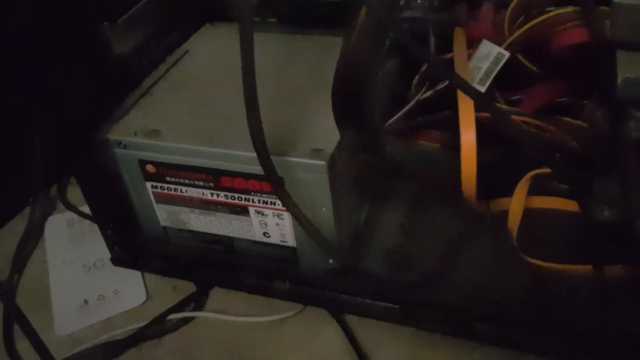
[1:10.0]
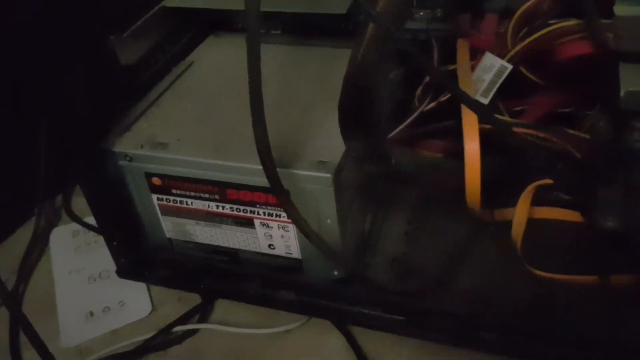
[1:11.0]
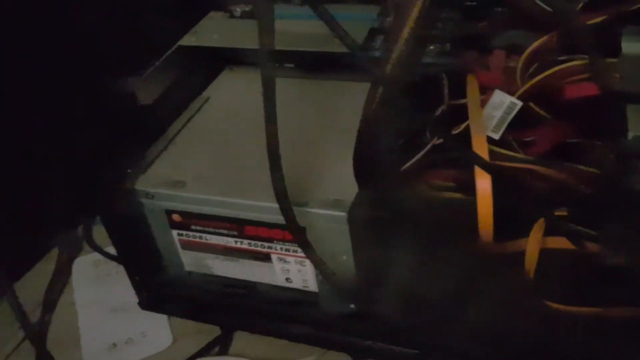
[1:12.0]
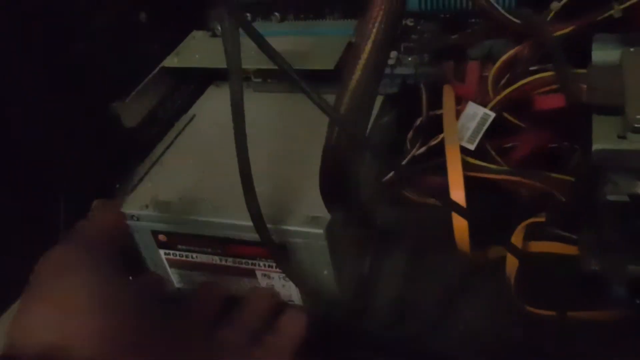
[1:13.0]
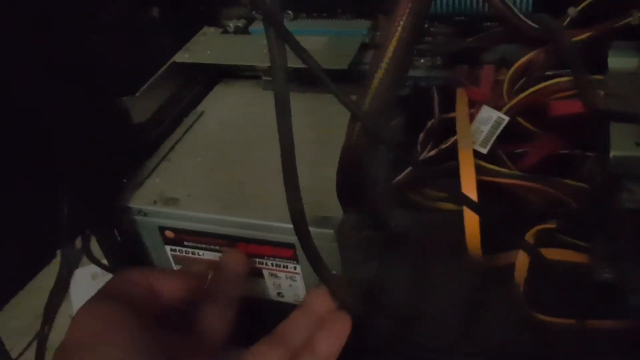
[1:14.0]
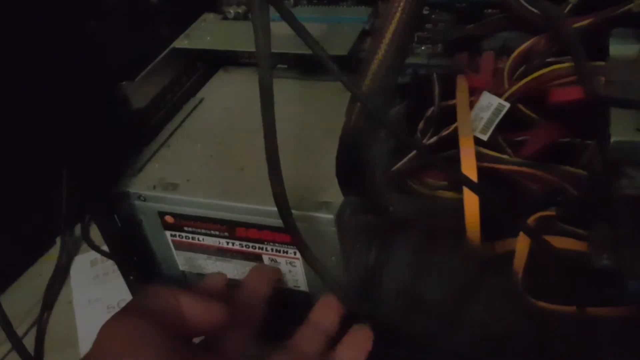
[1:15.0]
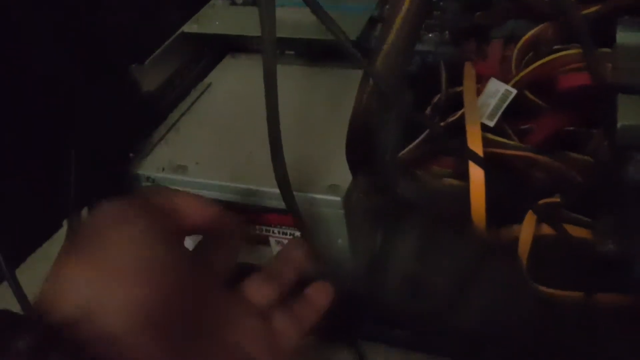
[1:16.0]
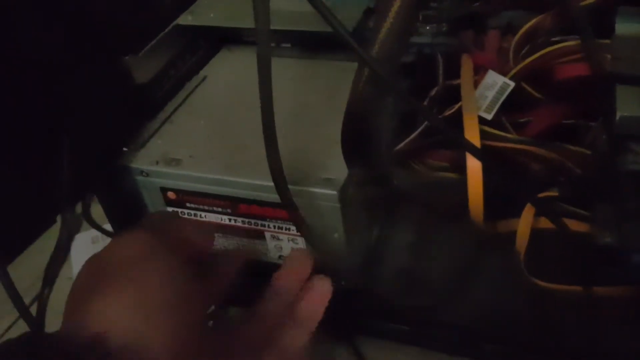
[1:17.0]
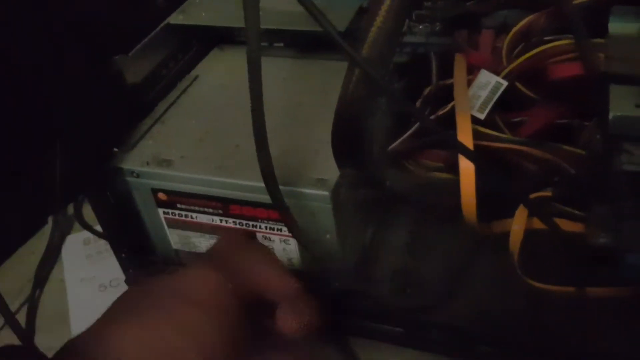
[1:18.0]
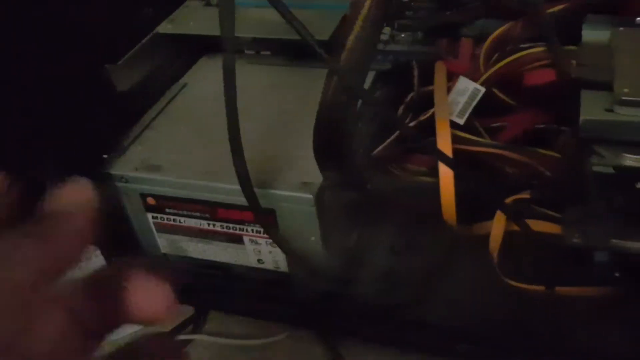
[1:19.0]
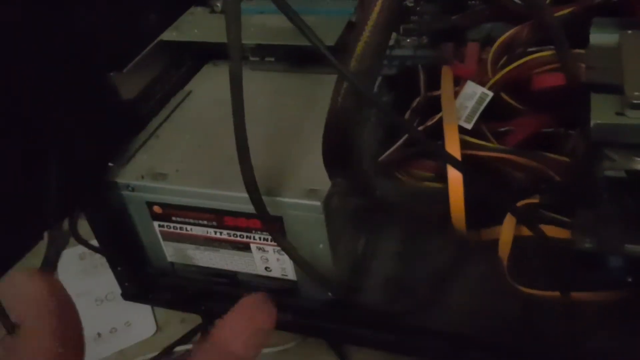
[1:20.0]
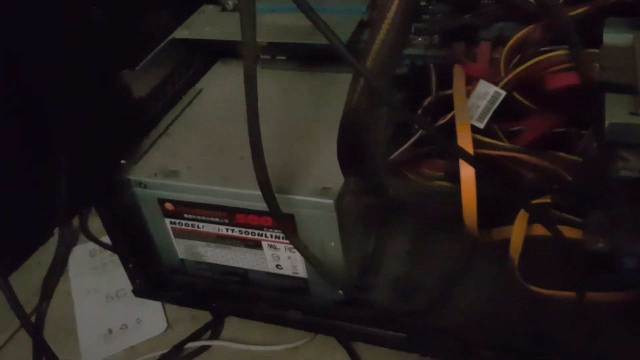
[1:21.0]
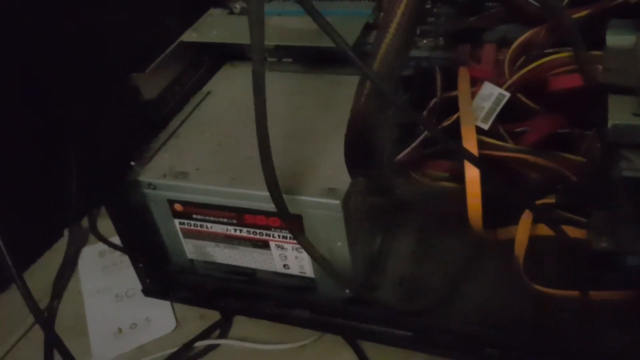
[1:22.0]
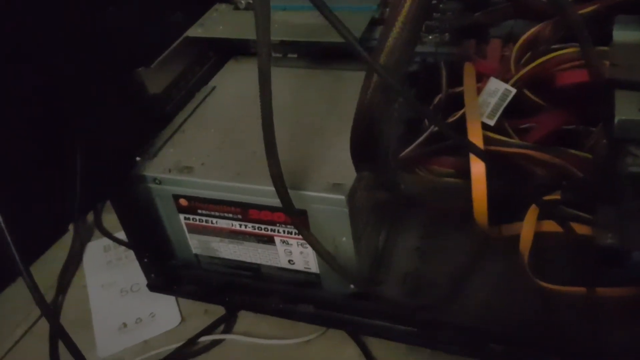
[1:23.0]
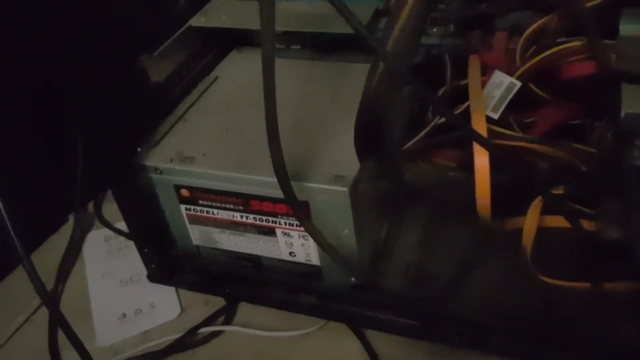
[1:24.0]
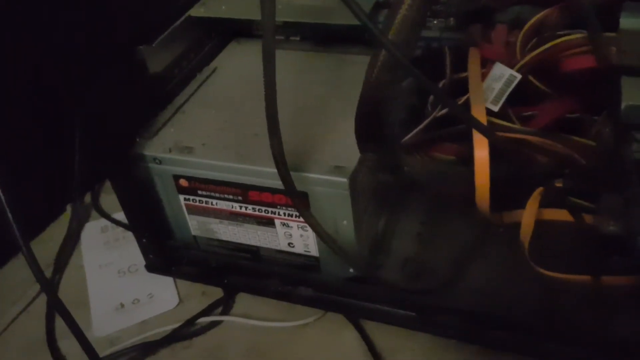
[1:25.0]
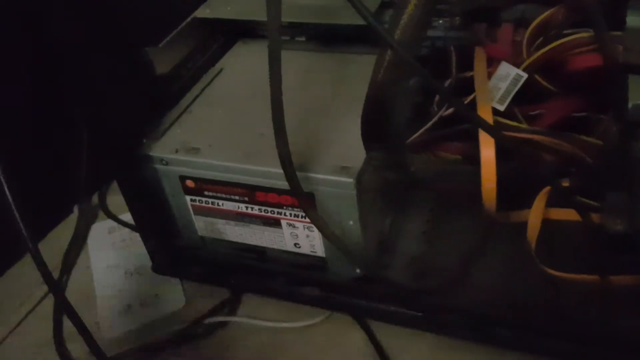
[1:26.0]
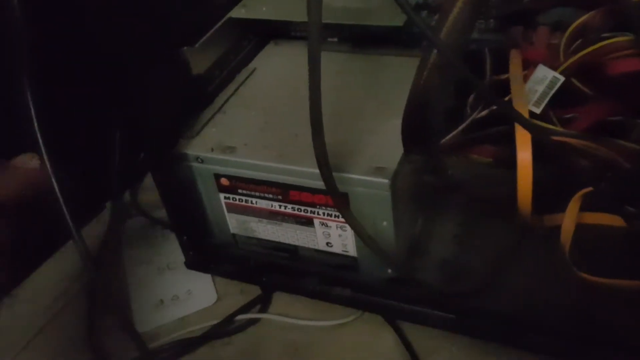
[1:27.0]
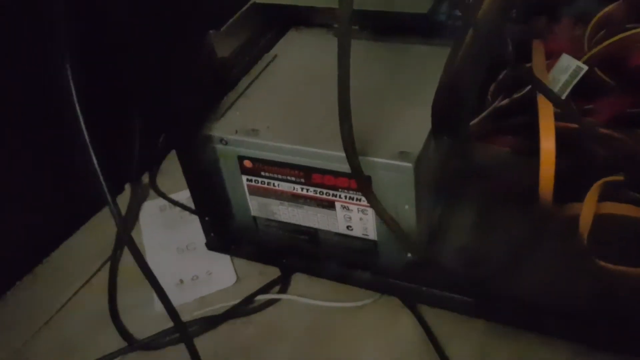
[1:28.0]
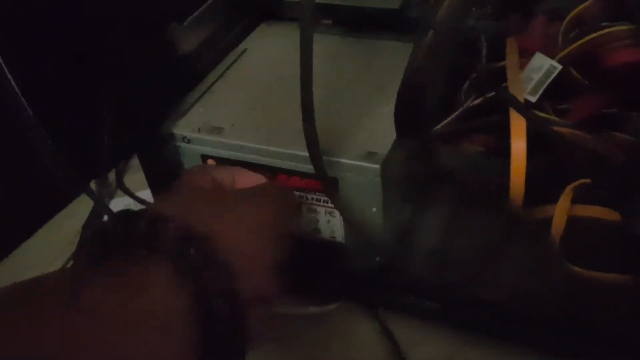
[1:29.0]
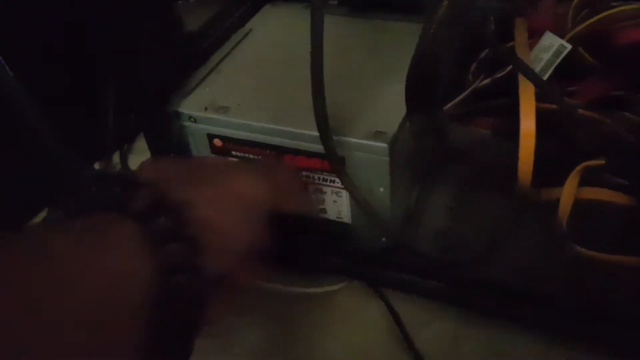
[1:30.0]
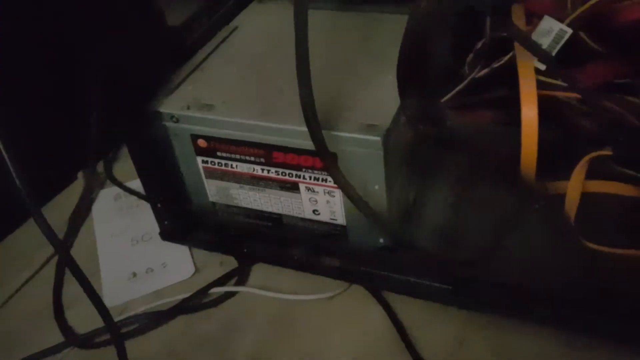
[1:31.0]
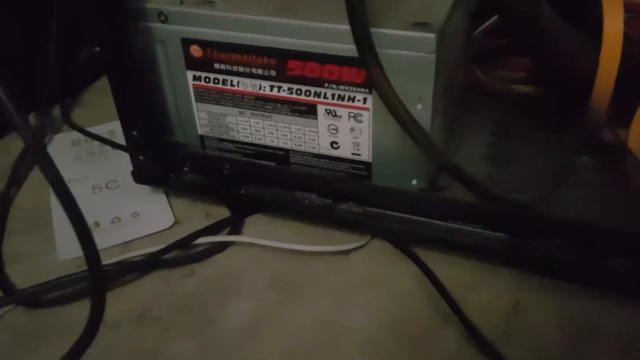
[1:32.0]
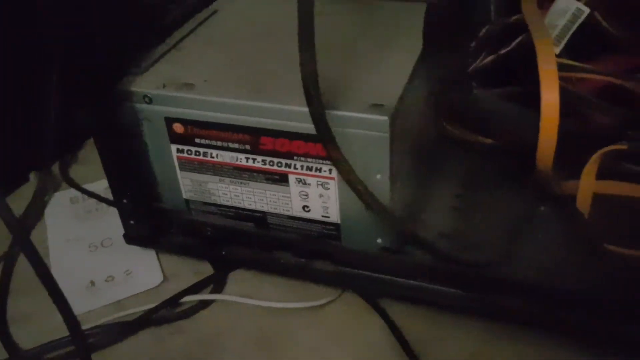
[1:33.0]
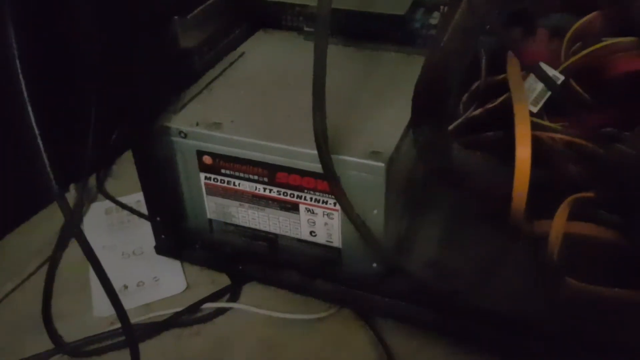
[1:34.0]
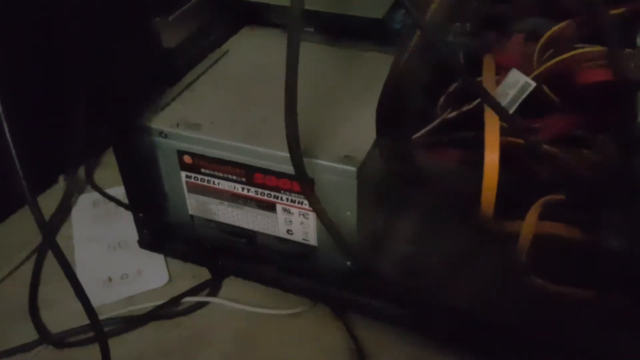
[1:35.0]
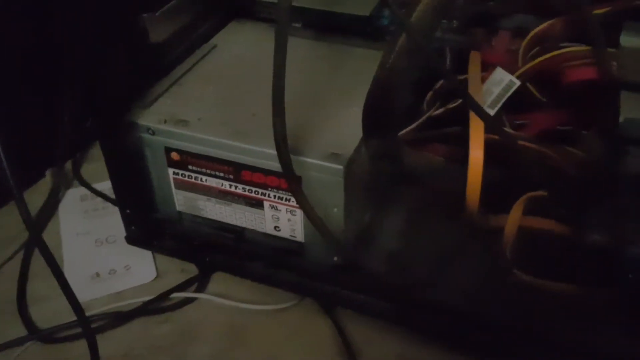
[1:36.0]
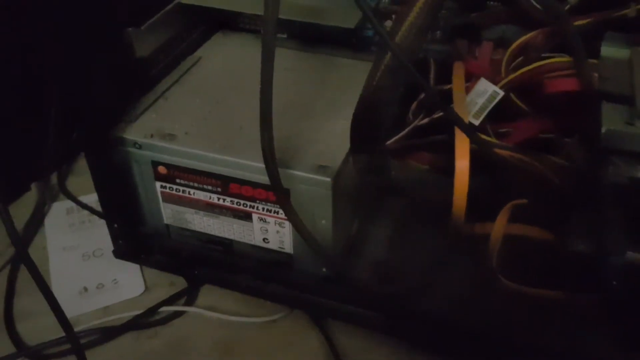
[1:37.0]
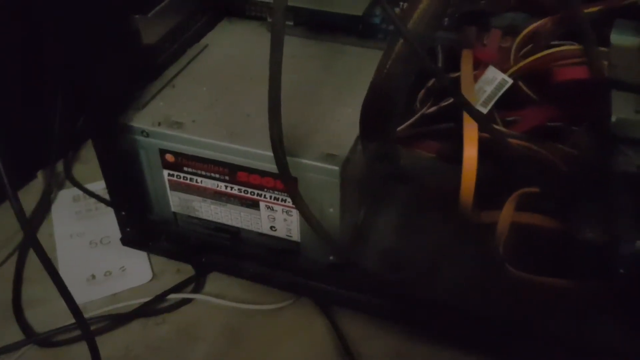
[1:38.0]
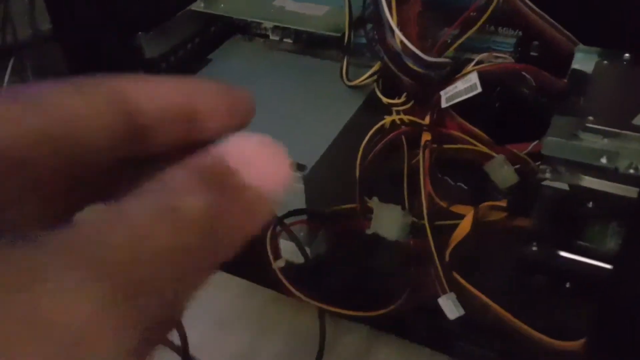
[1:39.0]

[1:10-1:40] The man touches the hardware with the middle finger of his left hand, apparently pointing at something too small to read, like a warning symbol on the front of the piece of computer hardware. The cords are mingled together to the right, and he kind of waves his hand in them. No person is visible, only a hand. He points at something on the left and at the cords, then flicks with his left index finger, probably at some kind of warning label on the hardware. He then puts his whole hand on it, especially the index and middle fingers of his left hand.